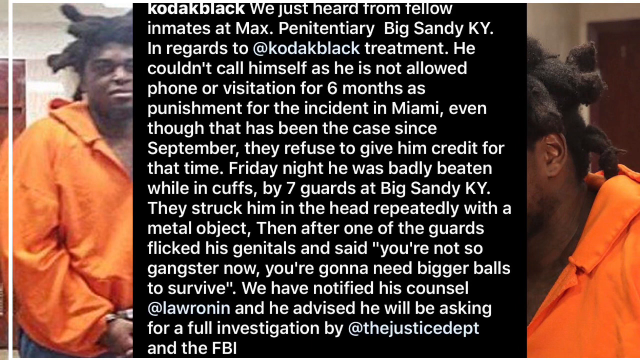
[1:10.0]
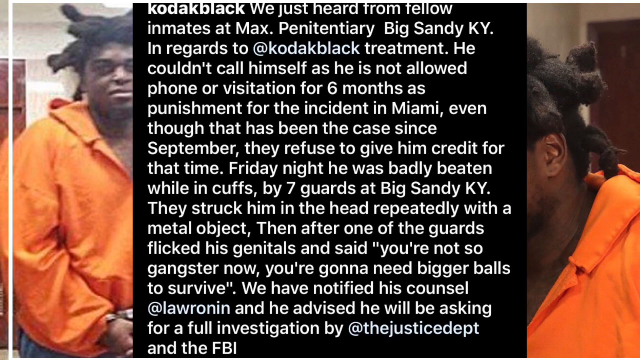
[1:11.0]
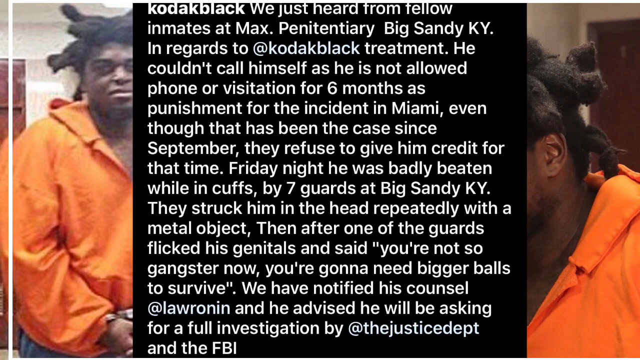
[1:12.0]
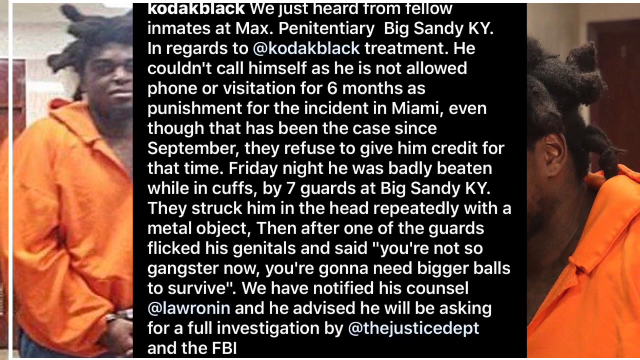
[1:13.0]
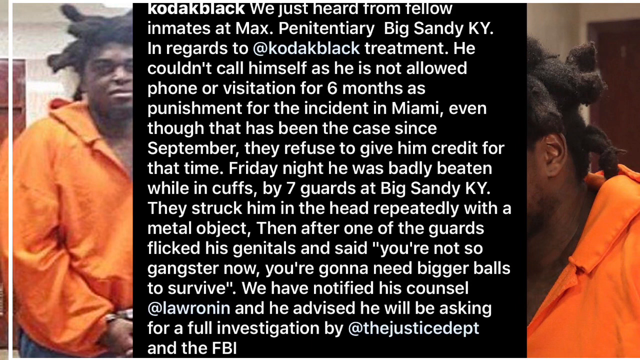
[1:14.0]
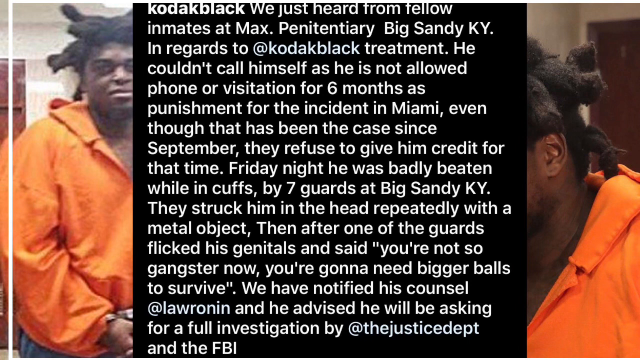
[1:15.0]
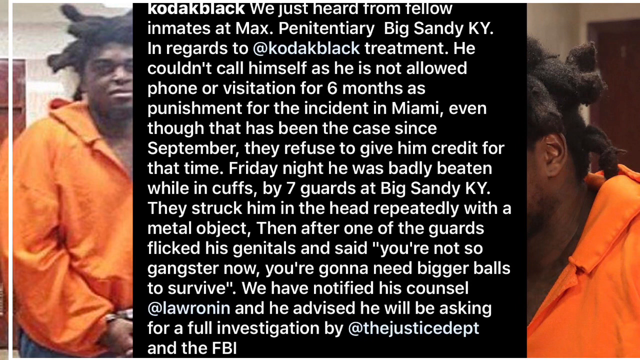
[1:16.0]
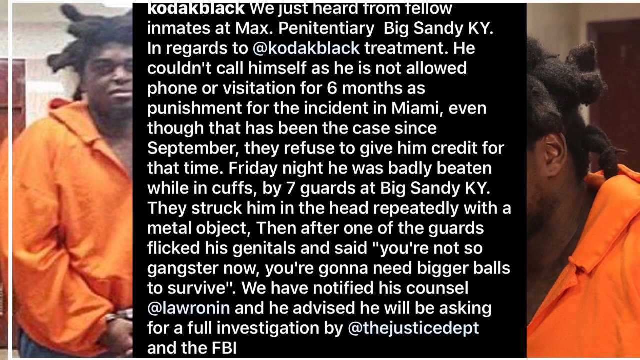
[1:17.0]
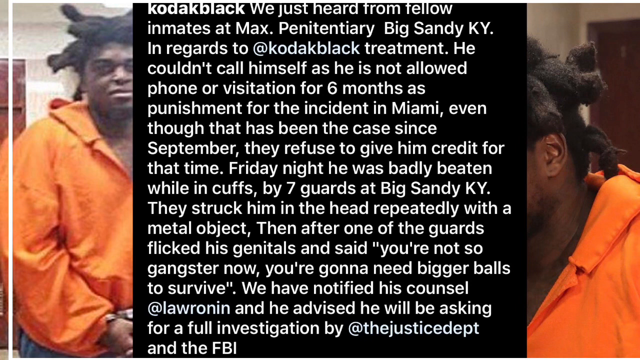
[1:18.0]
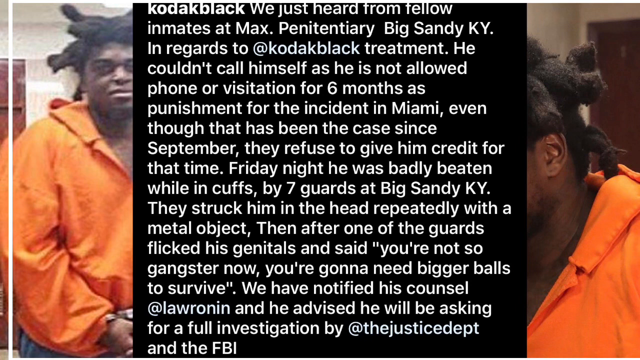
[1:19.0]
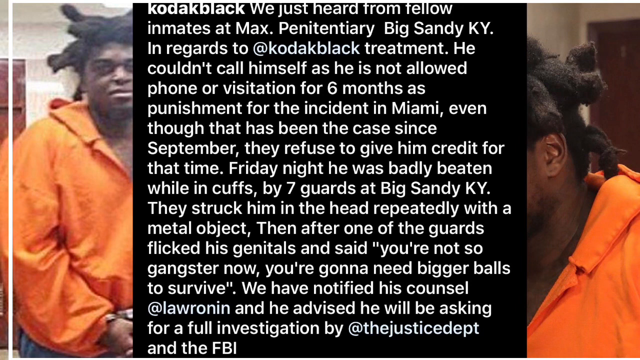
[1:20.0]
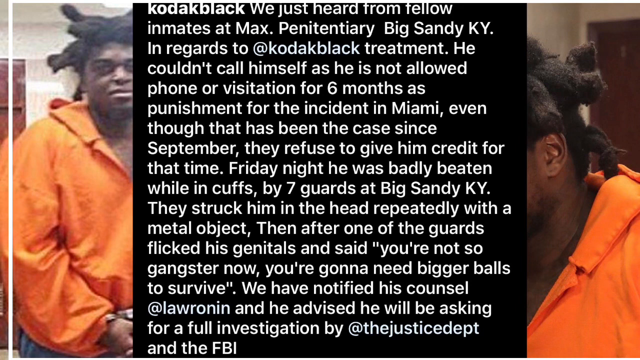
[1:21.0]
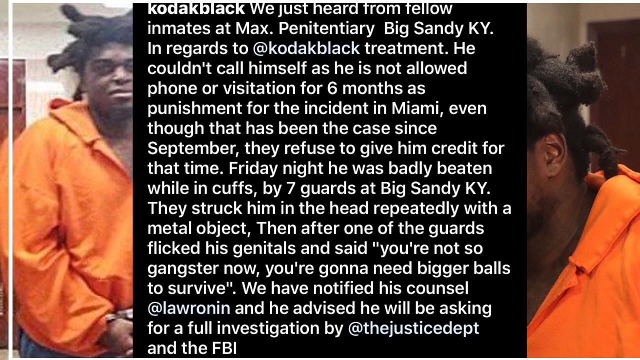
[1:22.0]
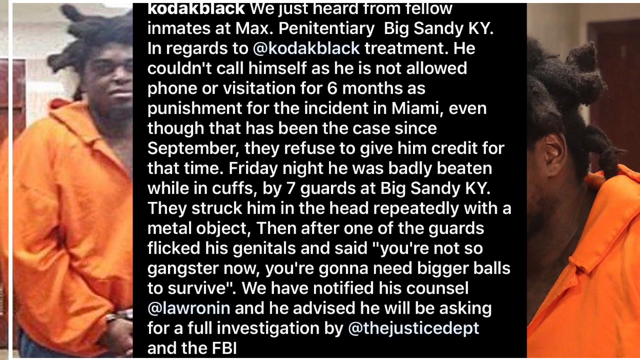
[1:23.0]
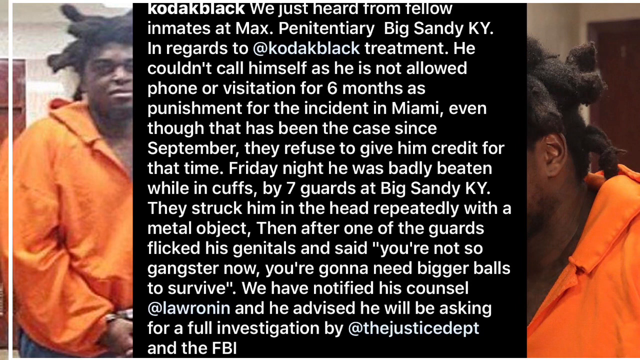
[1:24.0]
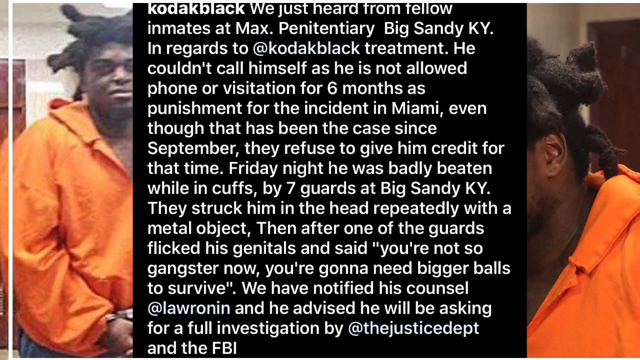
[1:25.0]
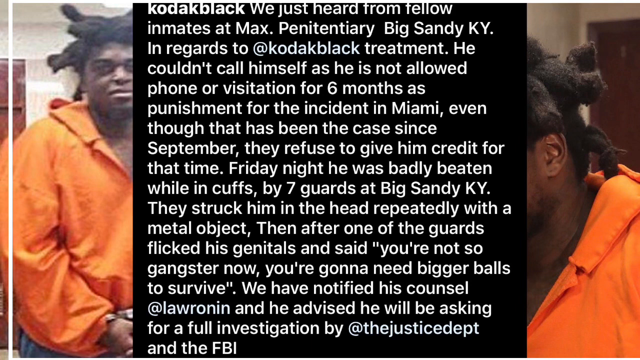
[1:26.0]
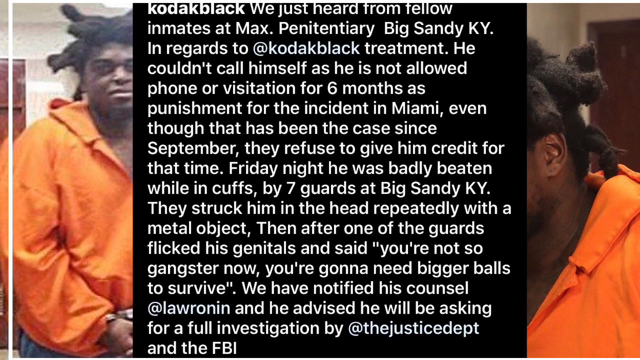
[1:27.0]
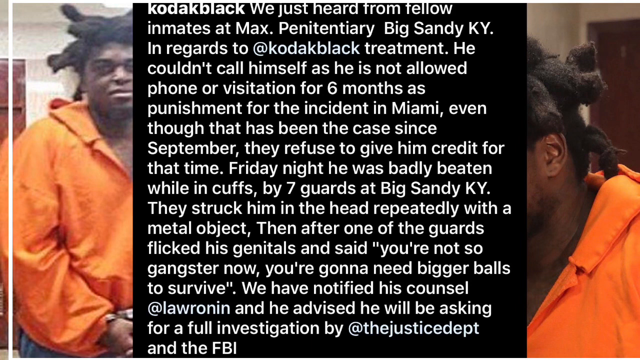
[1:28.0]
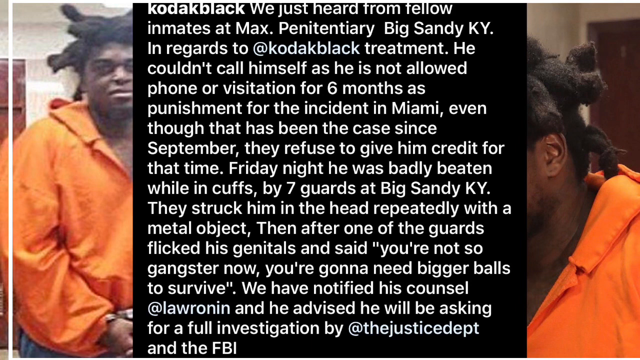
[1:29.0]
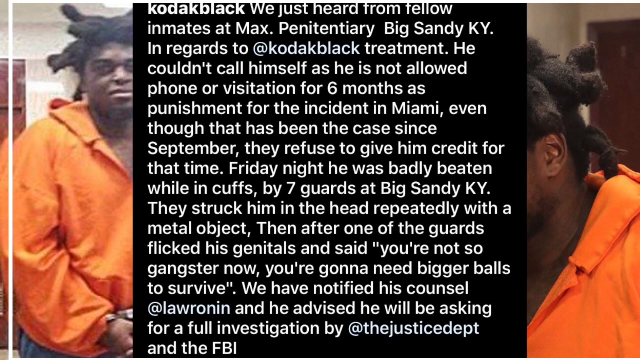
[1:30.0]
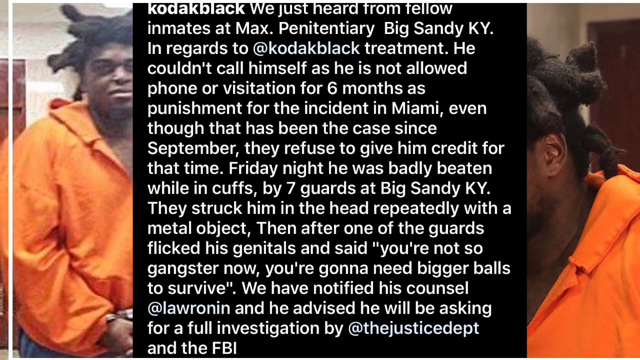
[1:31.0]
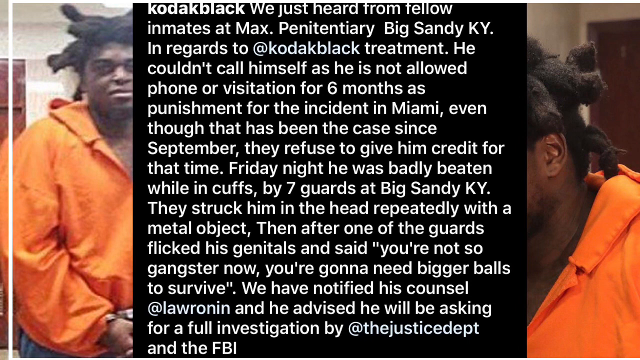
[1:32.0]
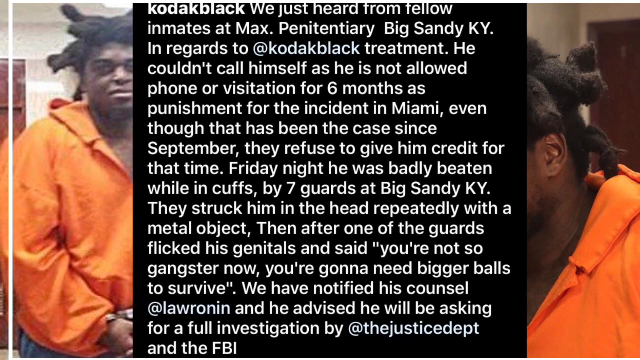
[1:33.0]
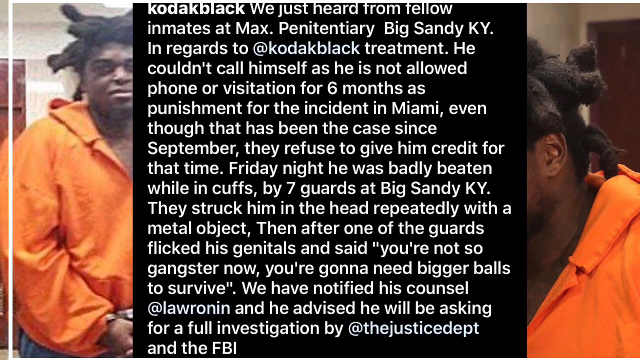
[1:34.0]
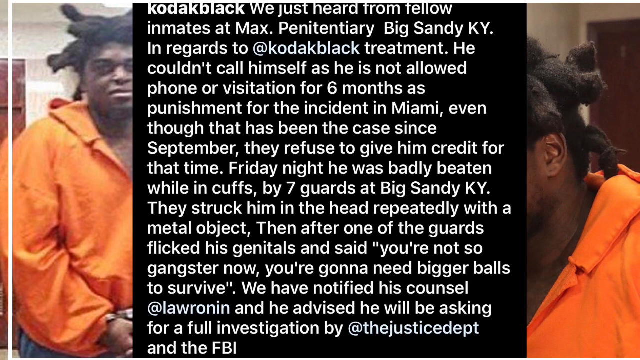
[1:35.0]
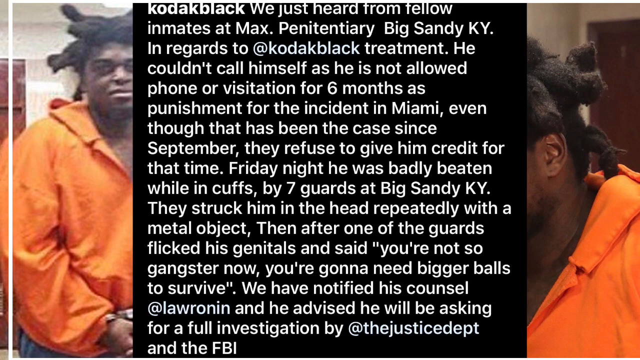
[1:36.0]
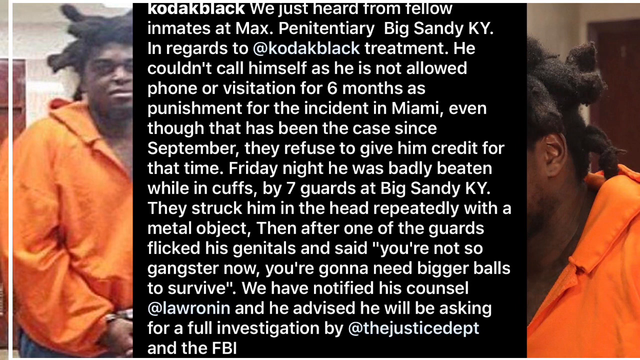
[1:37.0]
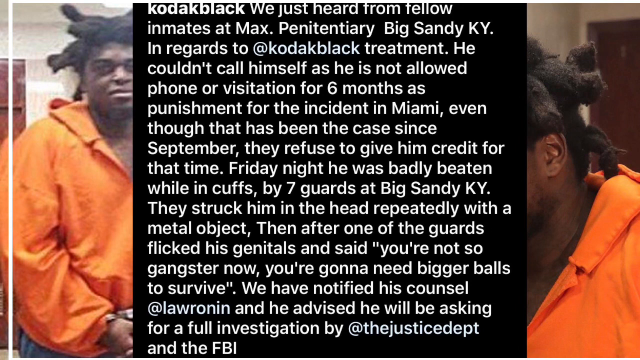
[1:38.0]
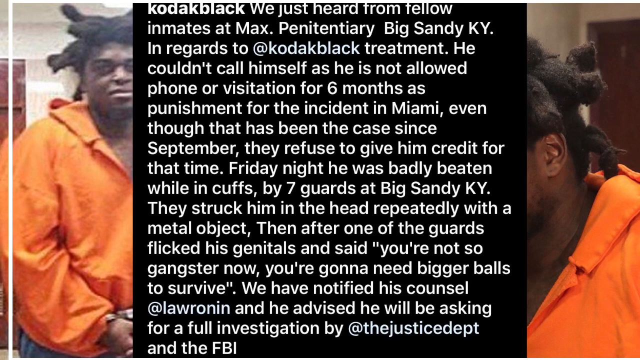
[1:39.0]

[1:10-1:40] The same static image continues: the two images of the man in the orange suit are partially visible on the left and right, with a large black block in the middle taking up most of the screen, filled with white text from the top to the bottom. There are no animations or other visual effects; nothing else happens on the screen.